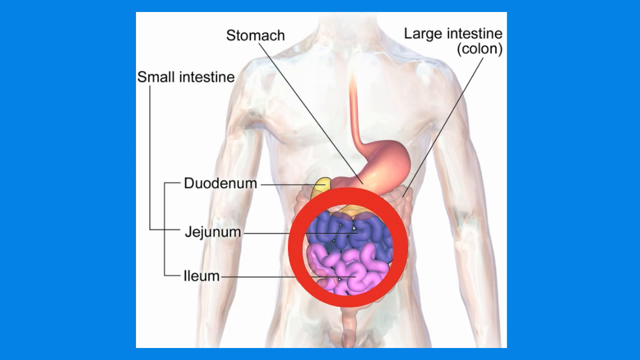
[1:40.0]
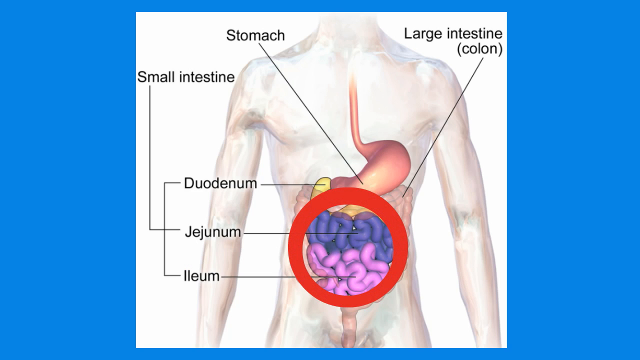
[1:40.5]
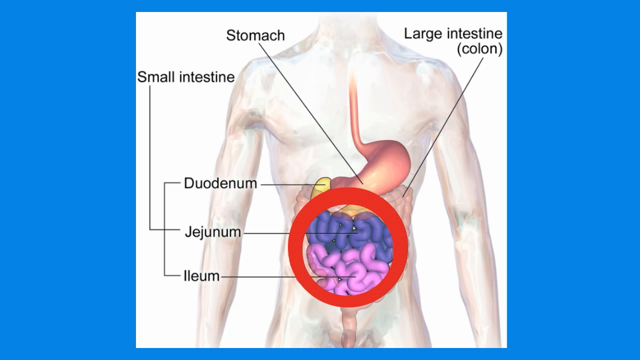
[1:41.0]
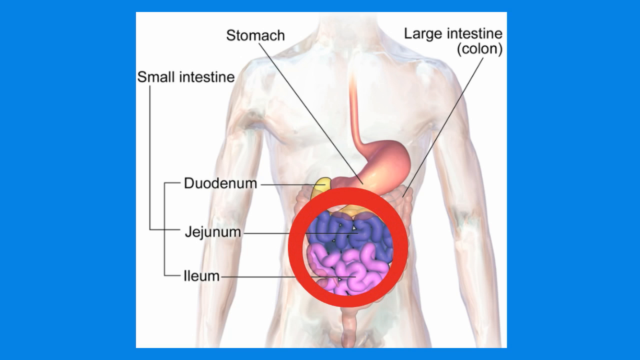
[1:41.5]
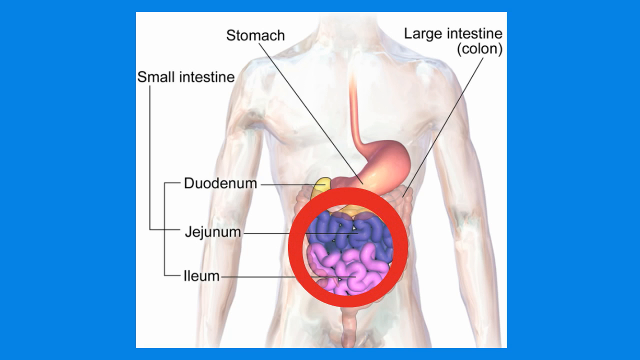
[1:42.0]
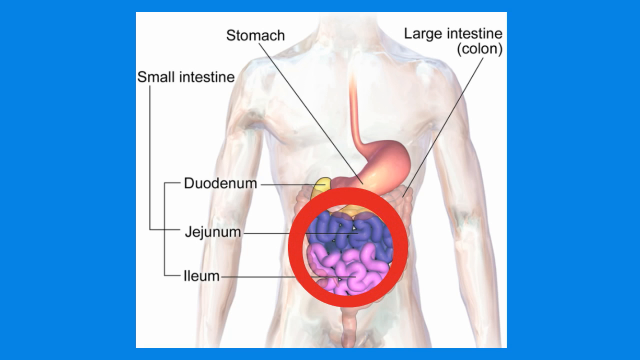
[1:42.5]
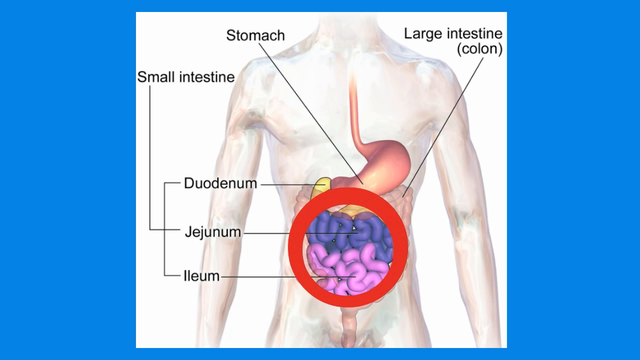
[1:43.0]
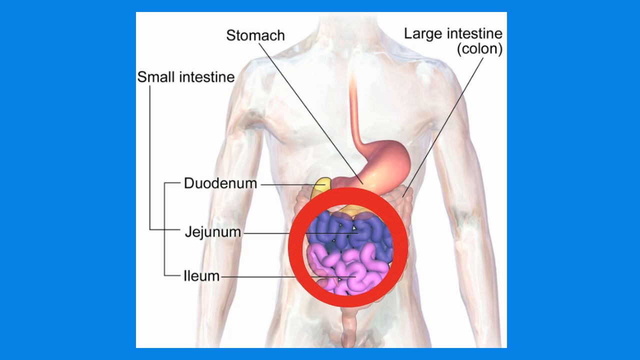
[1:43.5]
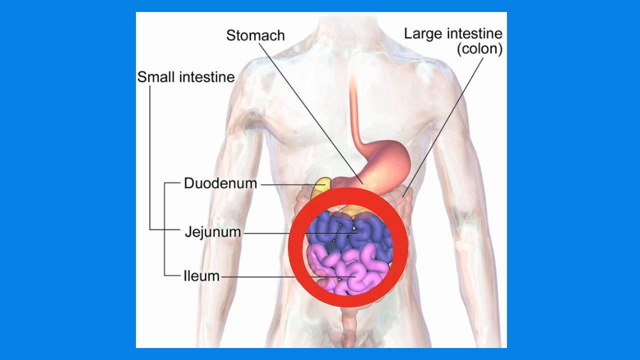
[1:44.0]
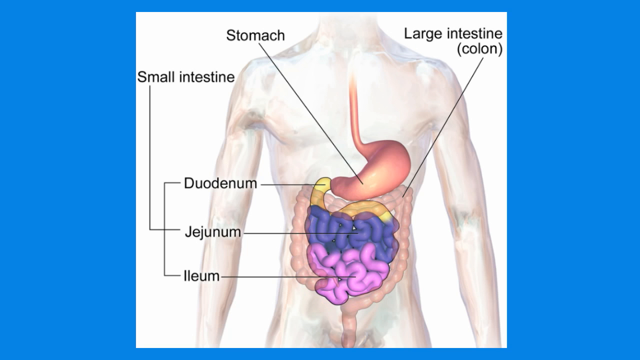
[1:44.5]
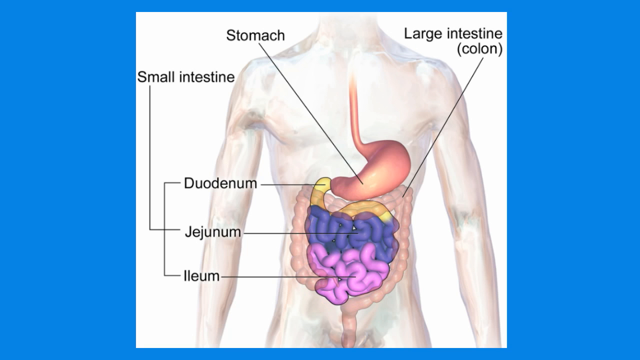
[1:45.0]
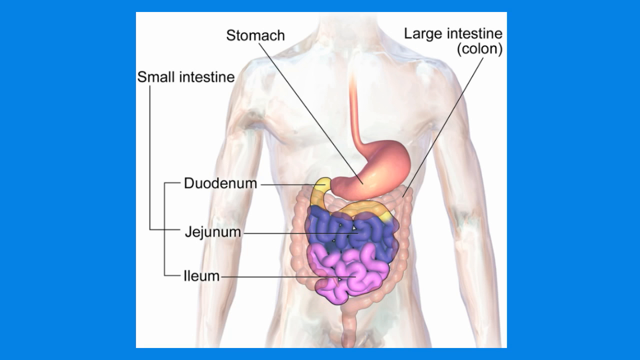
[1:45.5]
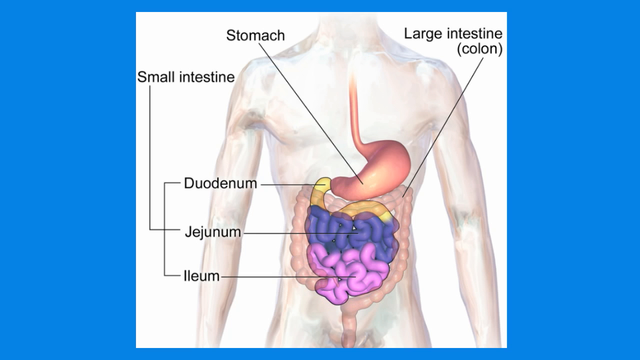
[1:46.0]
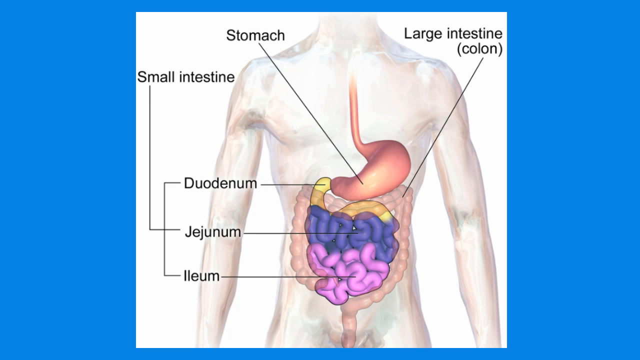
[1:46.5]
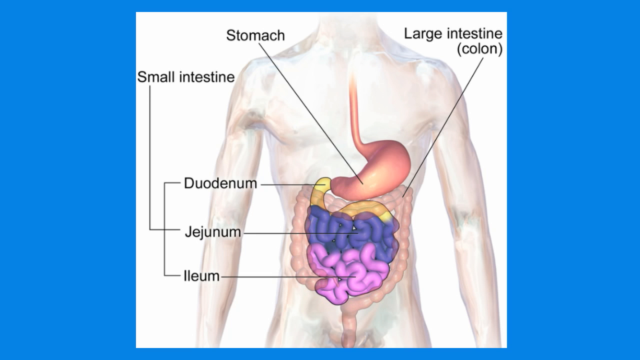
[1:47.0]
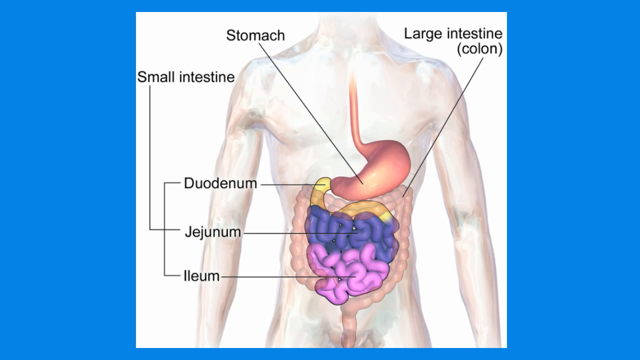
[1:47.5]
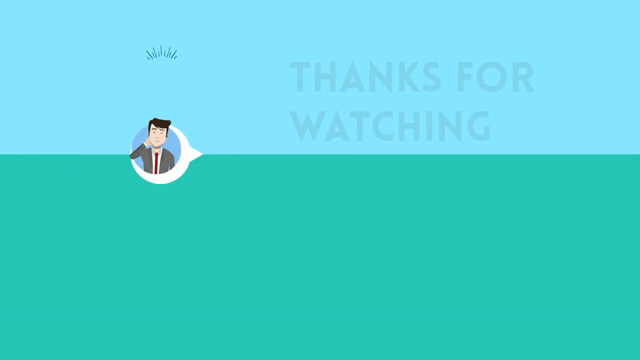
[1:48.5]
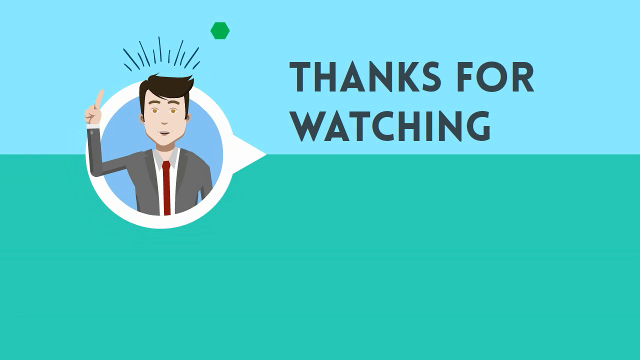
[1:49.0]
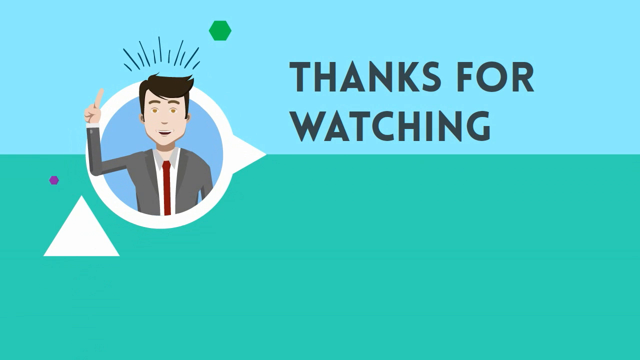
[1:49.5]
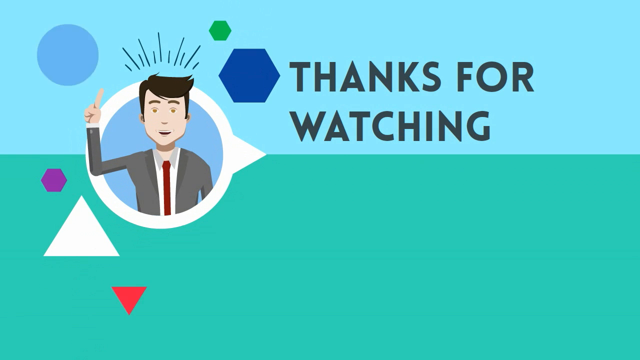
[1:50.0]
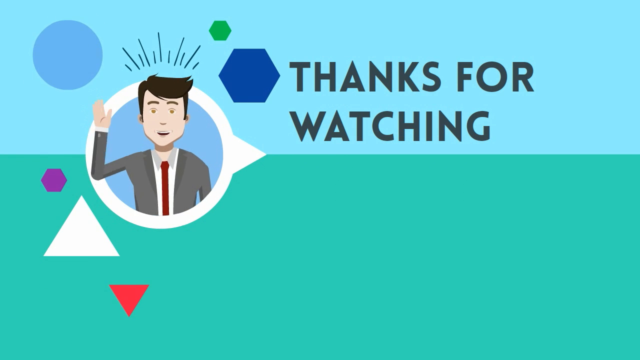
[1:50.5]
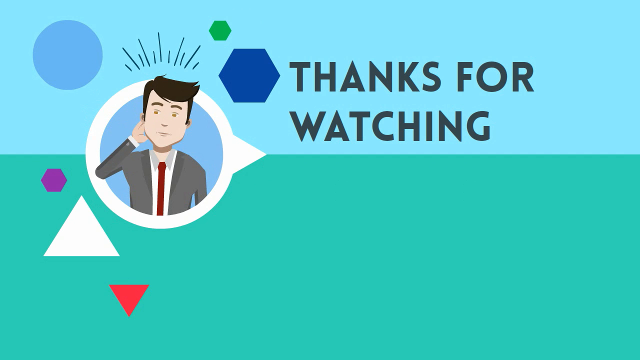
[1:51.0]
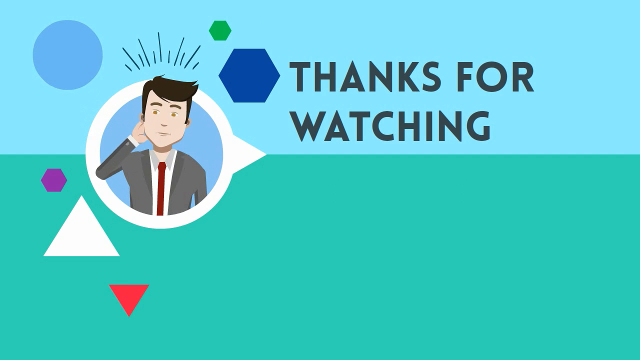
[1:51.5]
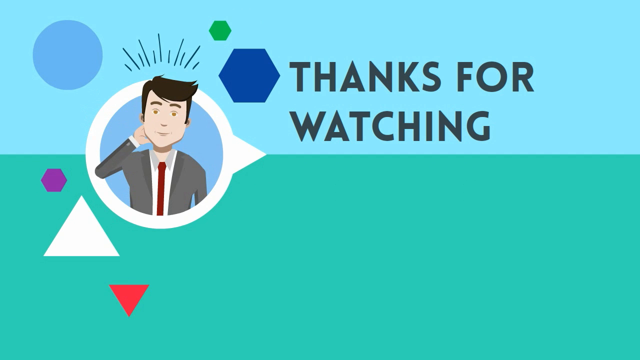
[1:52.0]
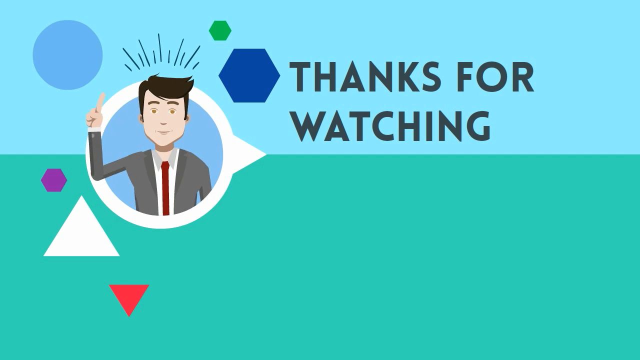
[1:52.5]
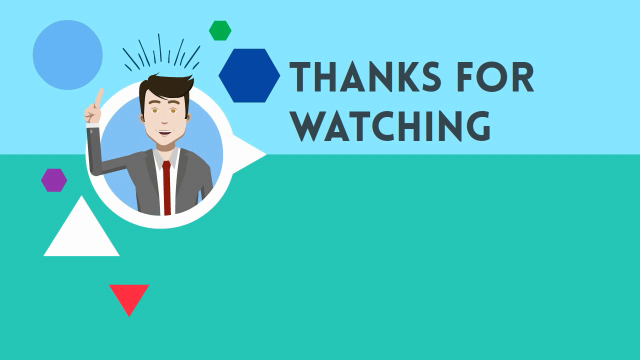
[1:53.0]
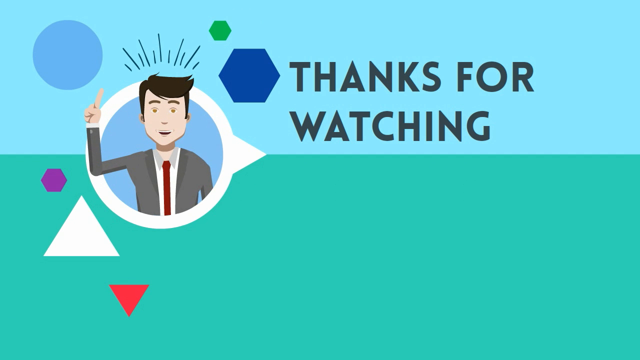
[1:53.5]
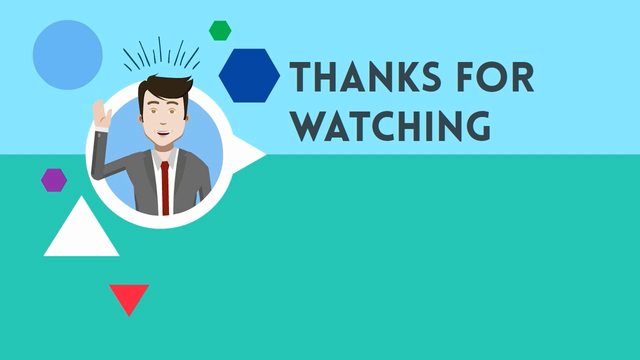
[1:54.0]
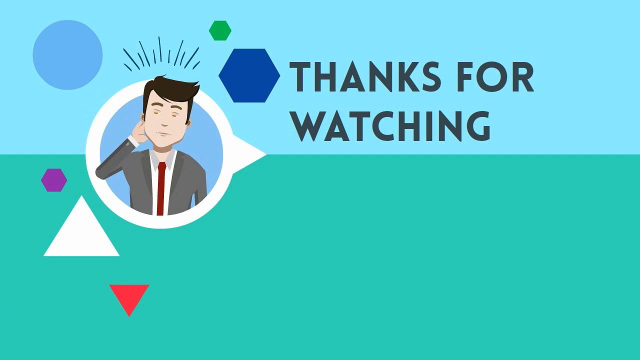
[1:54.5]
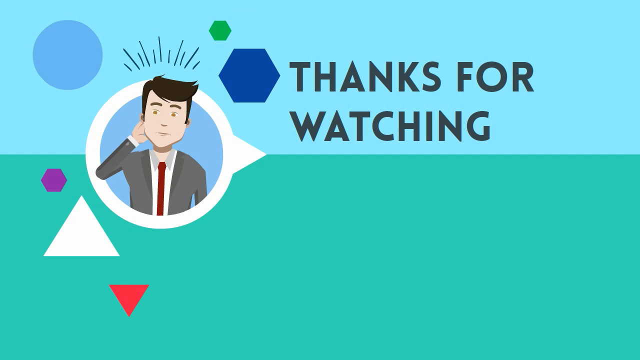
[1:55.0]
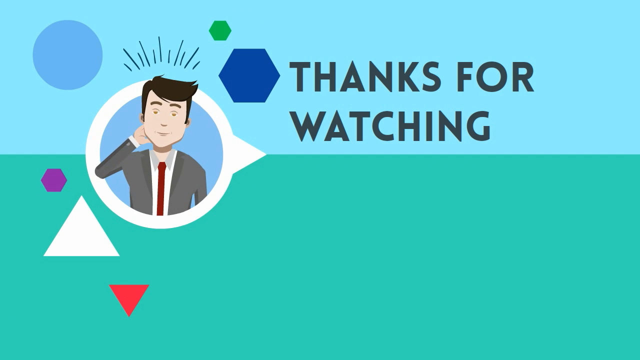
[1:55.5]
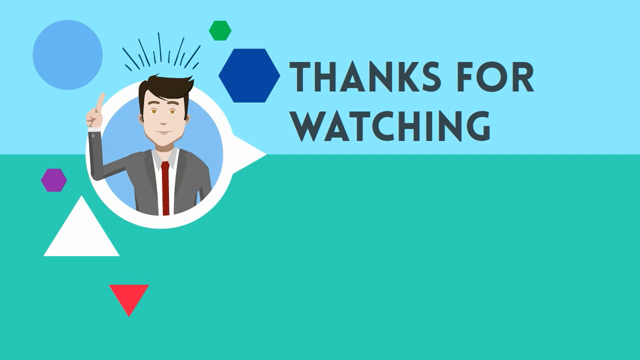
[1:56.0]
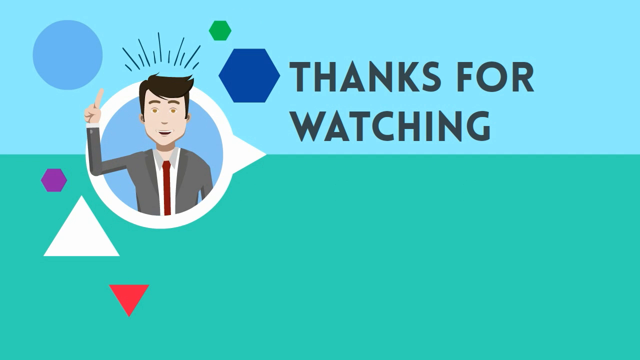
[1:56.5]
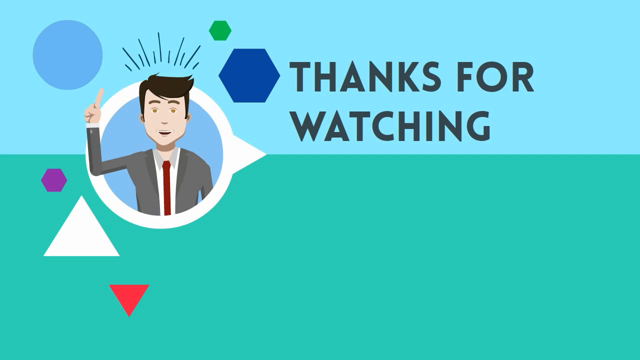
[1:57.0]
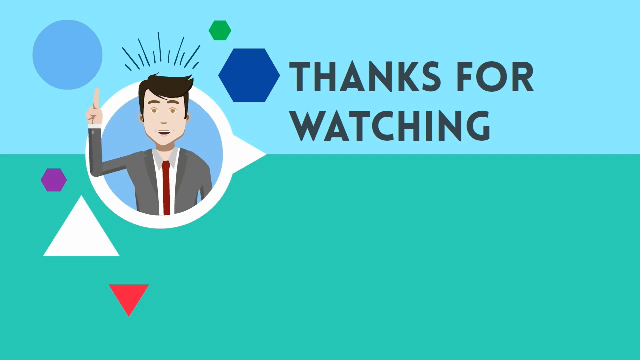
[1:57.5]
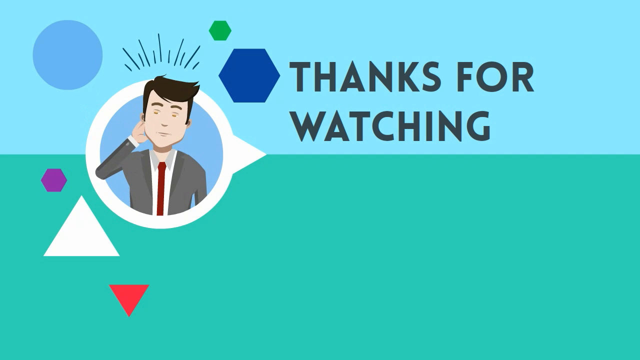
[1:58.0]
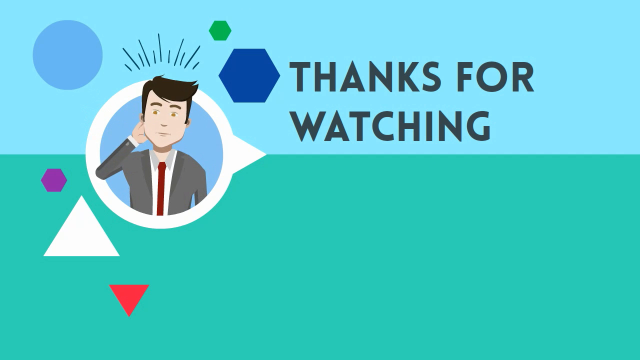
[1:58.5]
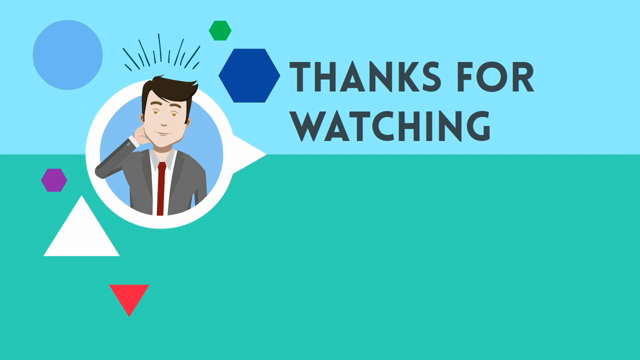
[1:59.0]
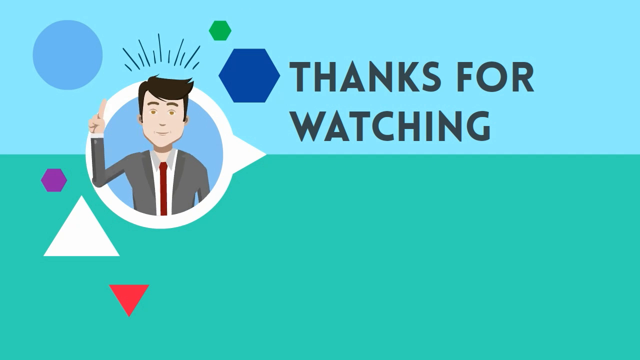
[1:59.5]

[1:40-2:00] A square image shows what looks like a semi-transparent human body with several internal organs in different colors. Black words inside the image are connected to specific points of the organs by very thin black lines. The quadrangular image is on a blue background. Immediately after, an animation with very colorful graphics appears, and the screen is divided into two parts: blue in the upper part and green in the lower part. At the top of the screen, dark writing says "Thanks for watching". On the left, inside a white circle, a stylized man appears wearing a gray jacket, a white shirt and a red tie, with his right arm raised and his right index finger raised.